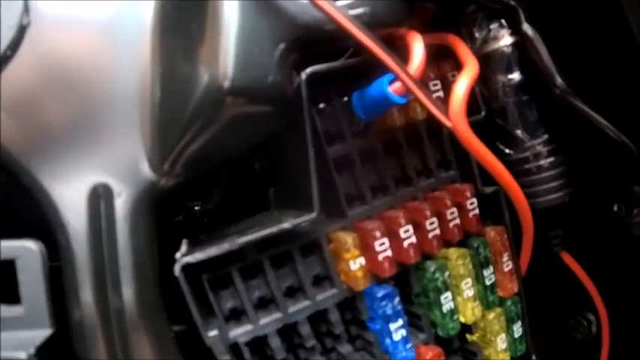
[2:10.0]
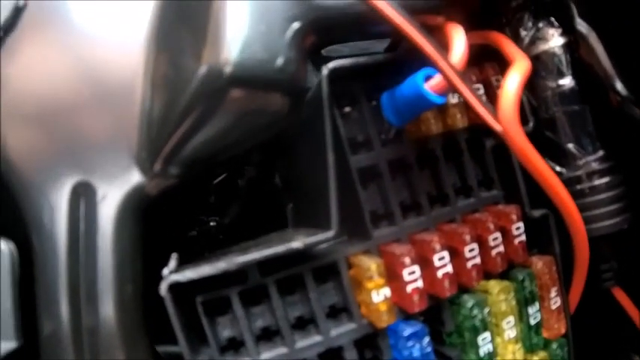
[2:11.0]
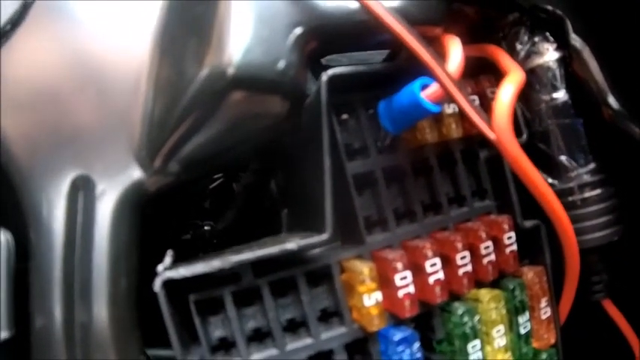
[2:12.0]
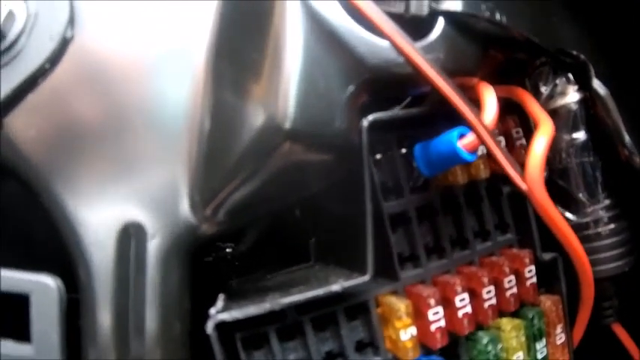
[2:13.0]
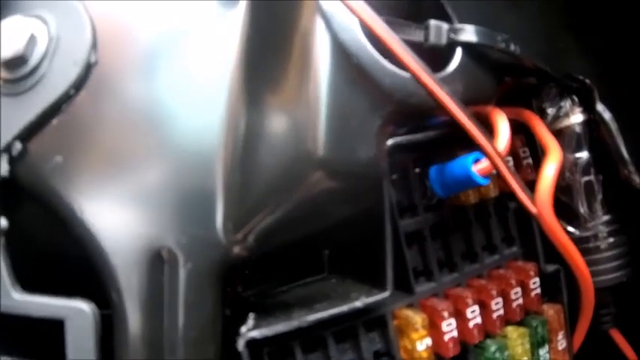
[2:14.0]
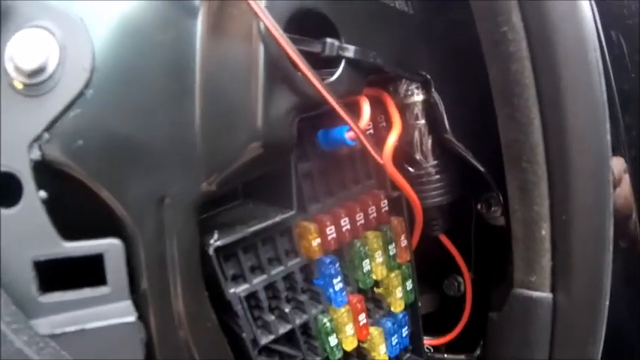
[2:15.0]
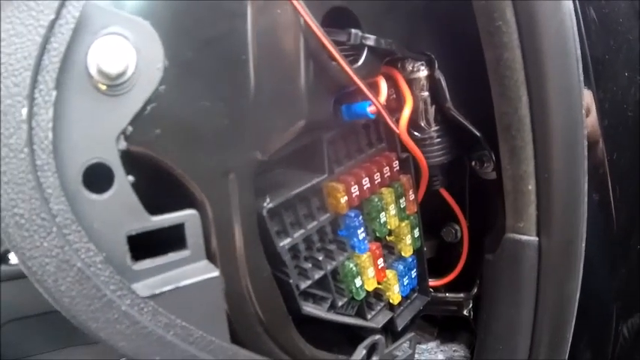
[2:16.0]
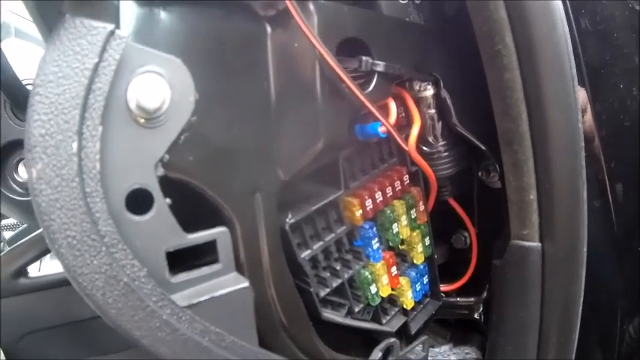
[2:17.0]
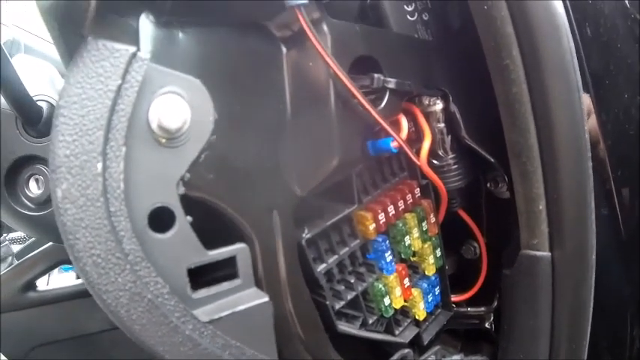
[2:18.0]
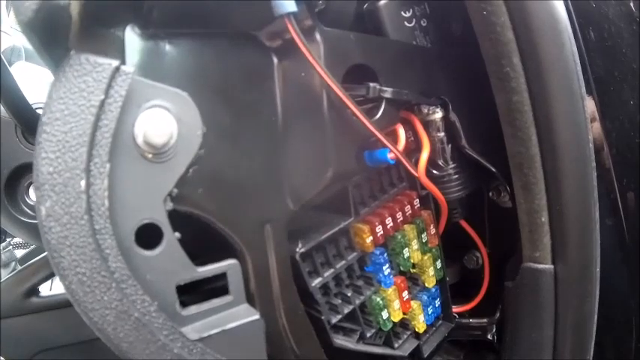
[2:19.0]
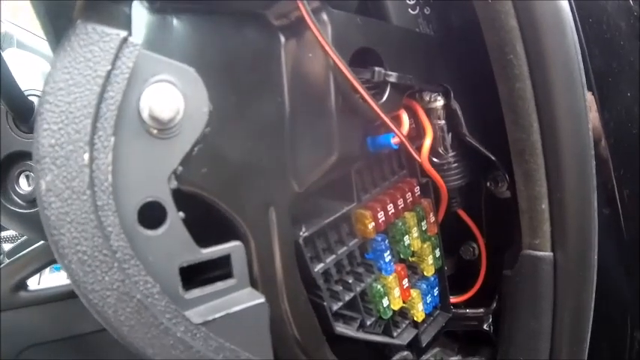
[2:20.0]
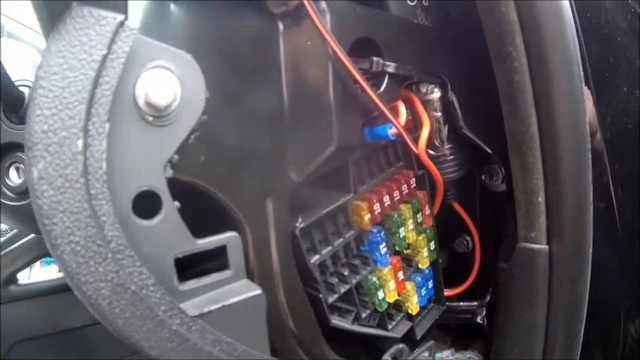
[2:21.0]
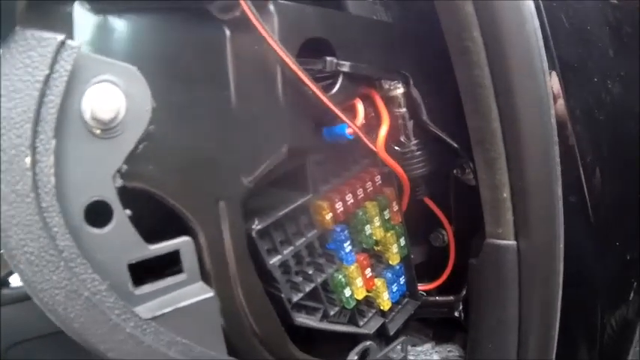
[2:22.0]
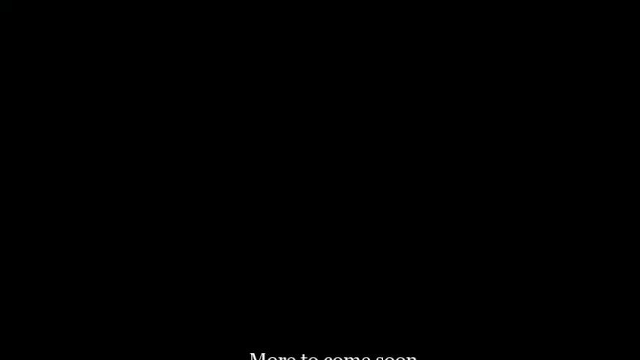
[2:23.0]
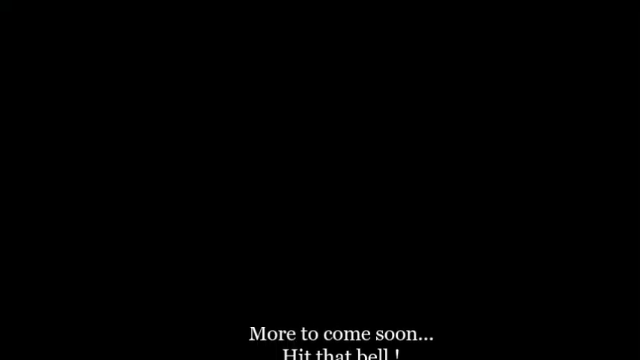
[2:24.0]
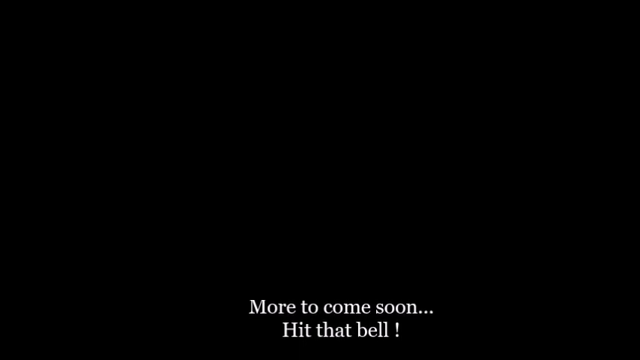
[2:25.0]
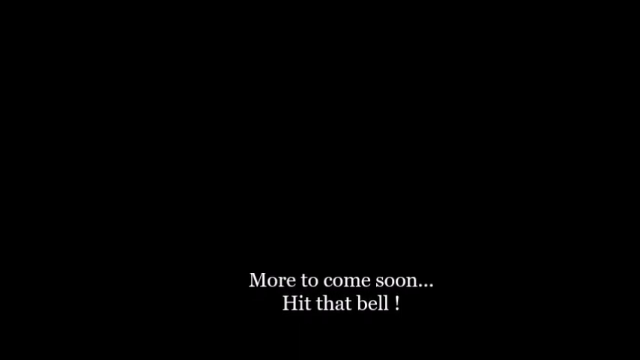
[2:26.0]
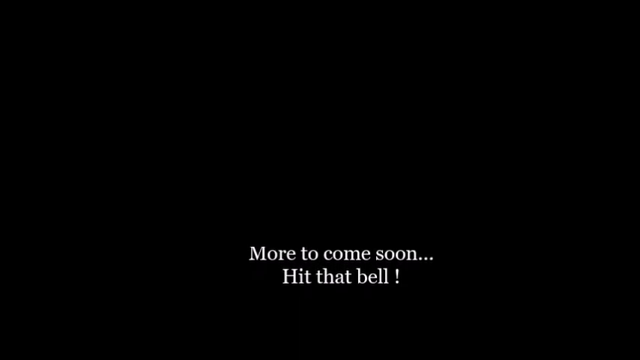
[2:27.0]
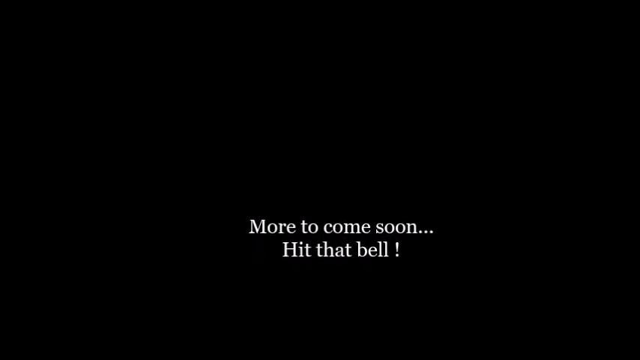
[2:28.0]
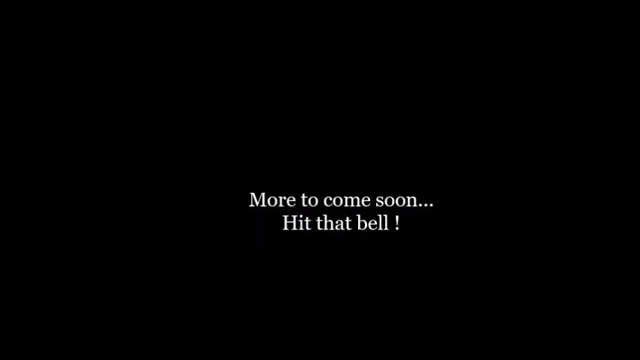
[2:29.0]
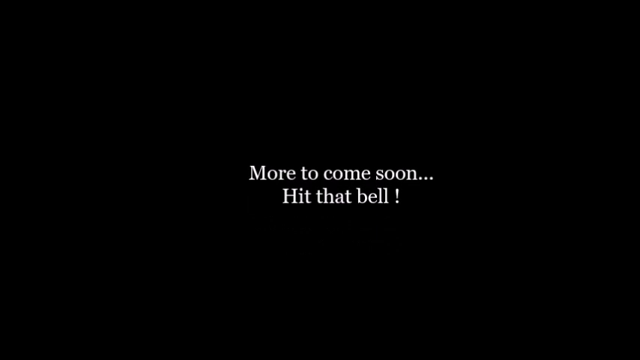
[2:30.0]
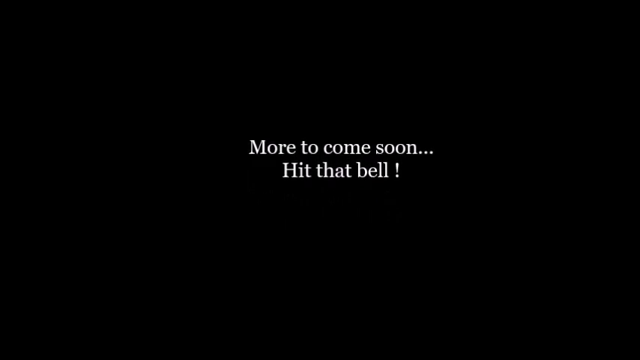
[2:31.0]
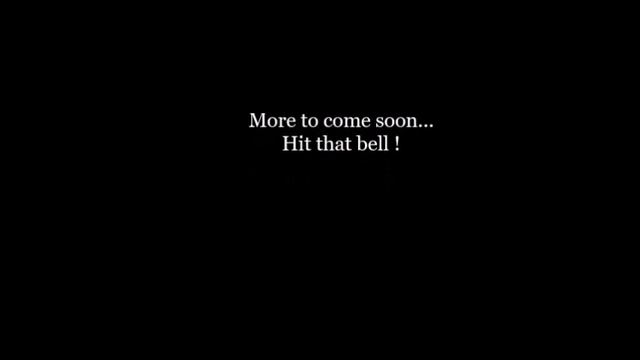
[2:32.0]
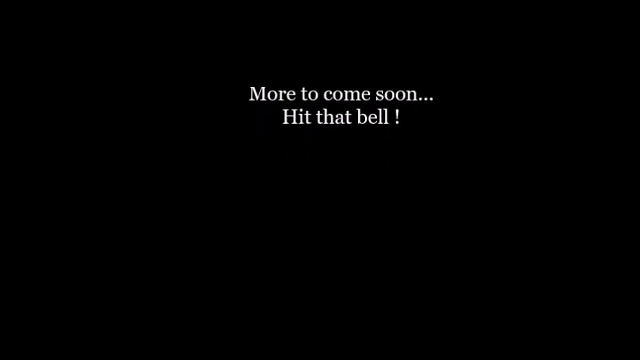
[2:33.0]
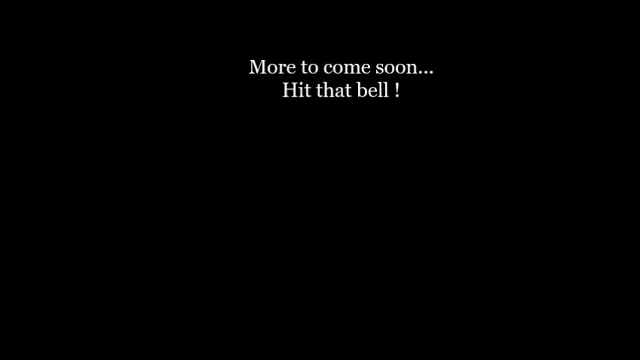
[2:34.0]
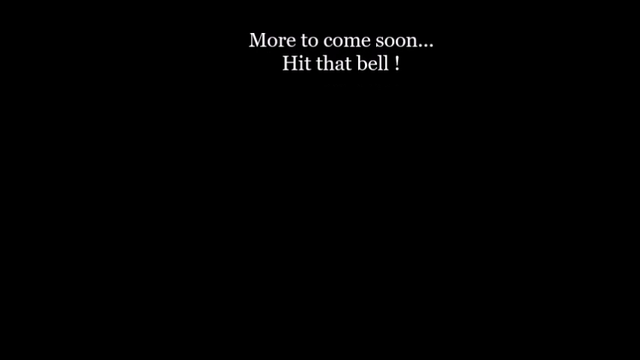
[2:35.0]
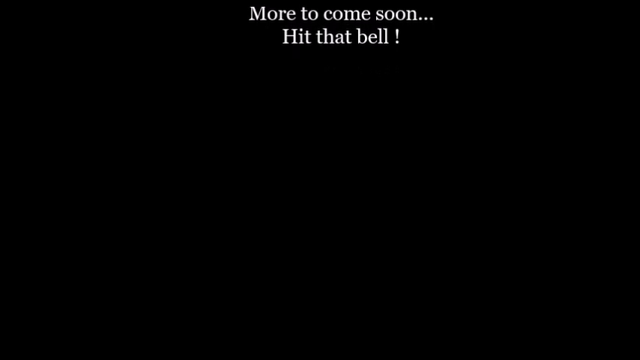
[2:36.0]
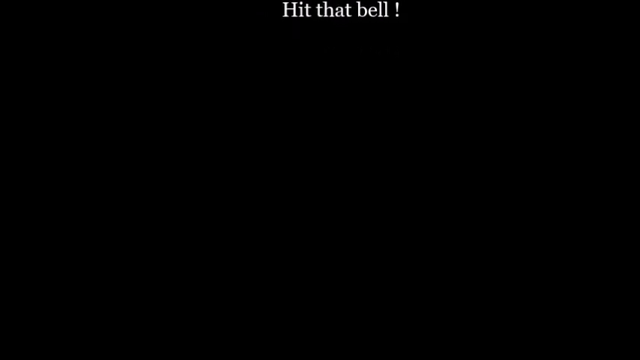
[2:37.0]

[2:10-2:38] A close-up shows a fuse box in a car. On the top row a wire is plugged in; there is an empty spot, then a red wire plugged in with blue at its end, then two orange fuses and two red fuses. Another red wire coming down blocks the view slightly. The second row has nothing in it. The third row, much wider than the first two, has four empty slots, then an orange number 5 fuse and five red number 10 fuses. The camera shakes quite a bit, then he backs up so more of the fuse box is visible. The next row down has four empty slots, then a blue 15, an empty slot, then a green one, a yellow one, a green one, and an orange one. In the following row, where the first two slots are empty there appears to be just one slot tipped diagonally, then an empty slot, then a green one, a yellow one, an orange one, two empty slots, a yellow one and a green one. The bottom row has just a yellow one and two blue ones. The screen turns black and words float up from below, reading "More to come soon... hit that bell!"